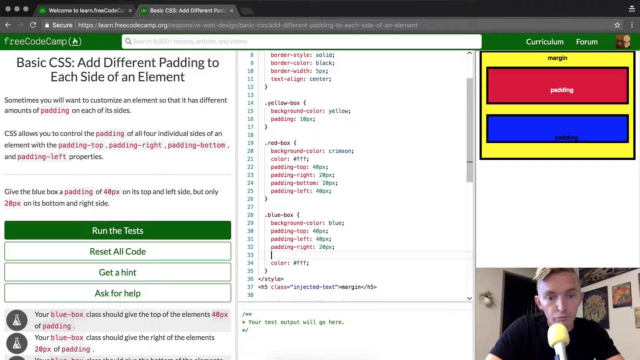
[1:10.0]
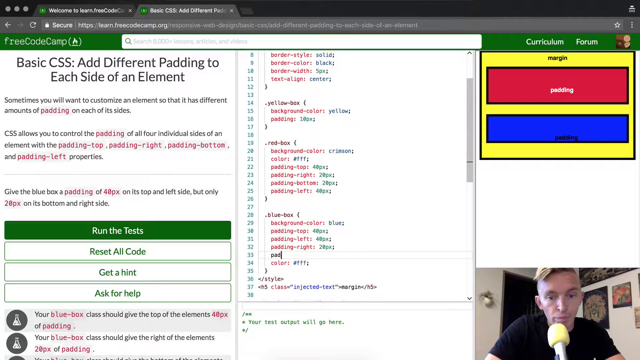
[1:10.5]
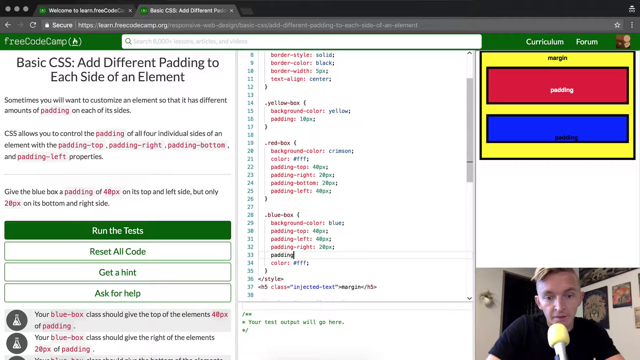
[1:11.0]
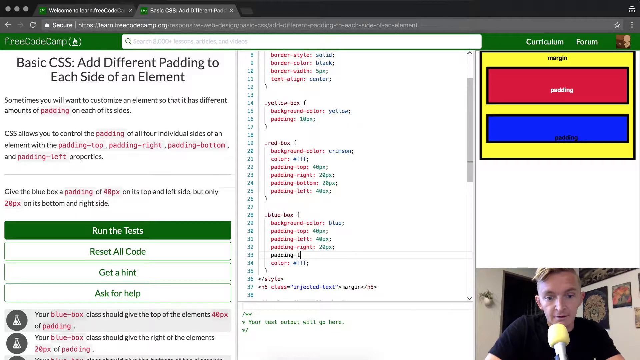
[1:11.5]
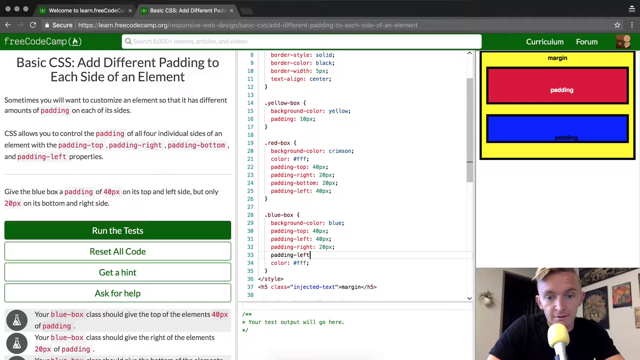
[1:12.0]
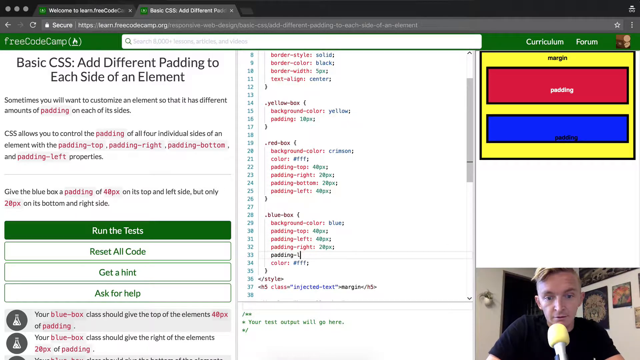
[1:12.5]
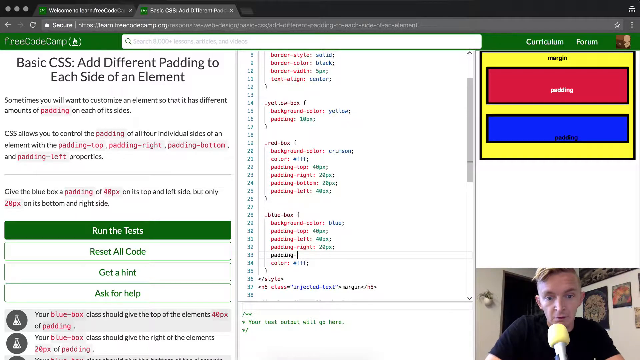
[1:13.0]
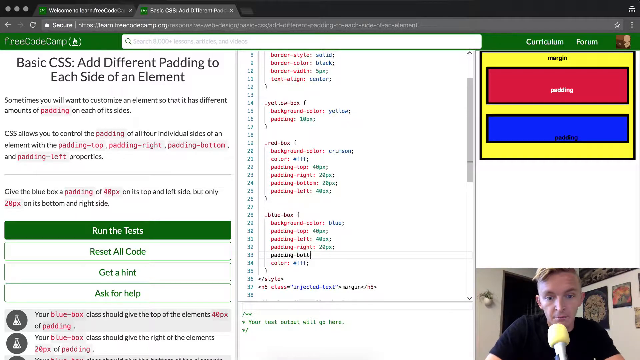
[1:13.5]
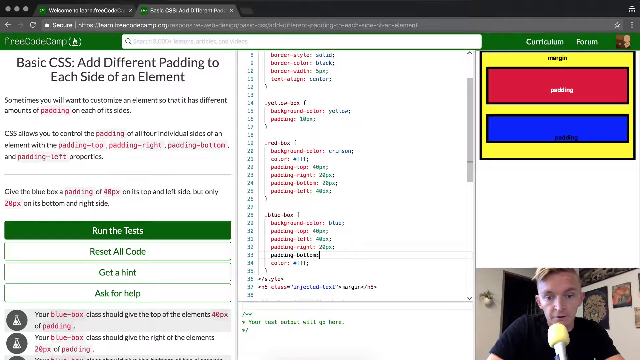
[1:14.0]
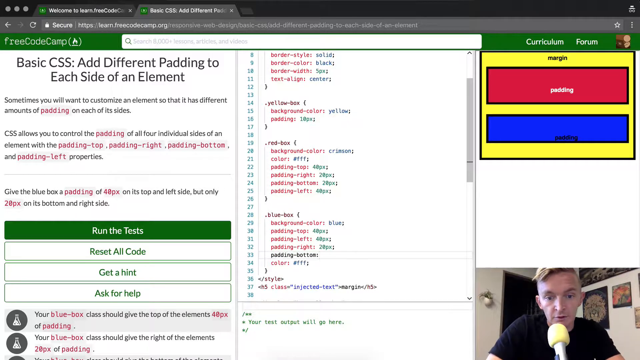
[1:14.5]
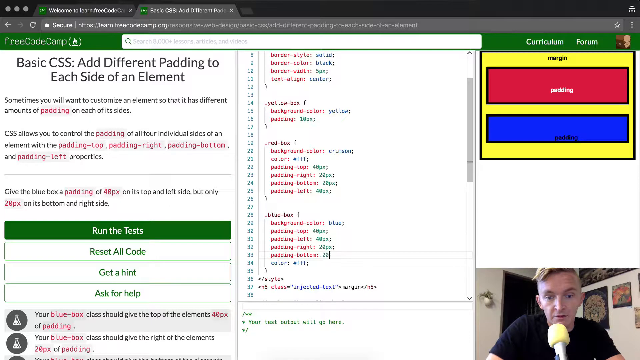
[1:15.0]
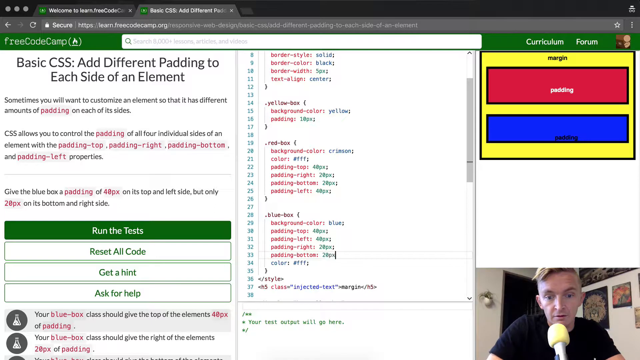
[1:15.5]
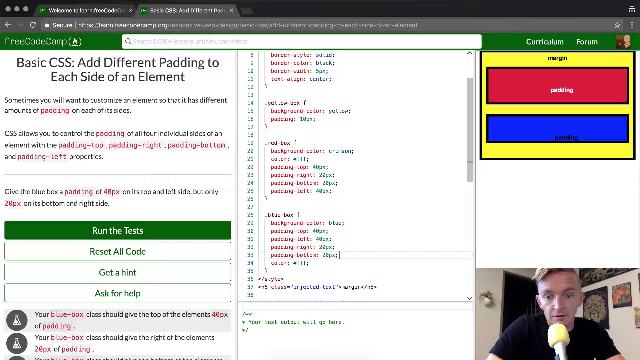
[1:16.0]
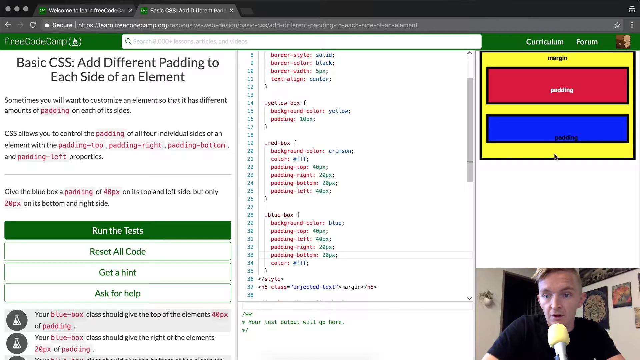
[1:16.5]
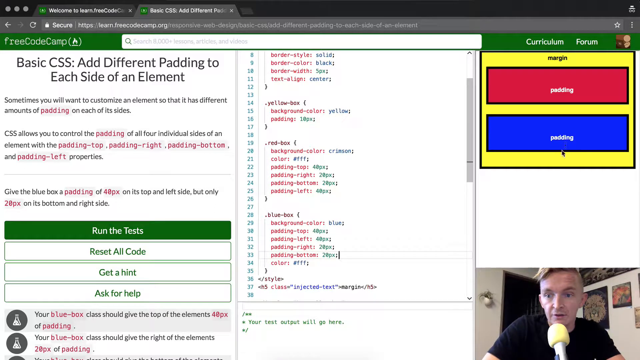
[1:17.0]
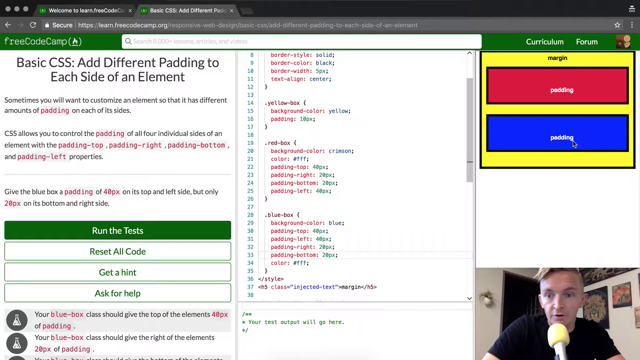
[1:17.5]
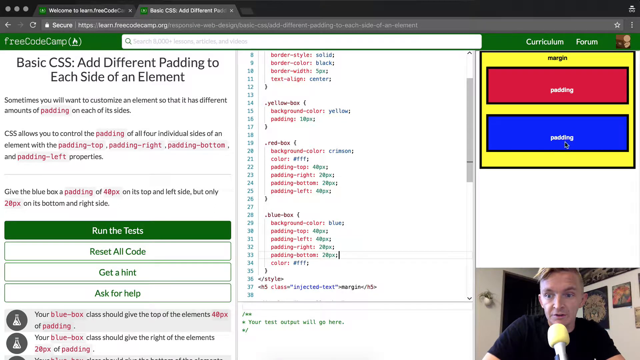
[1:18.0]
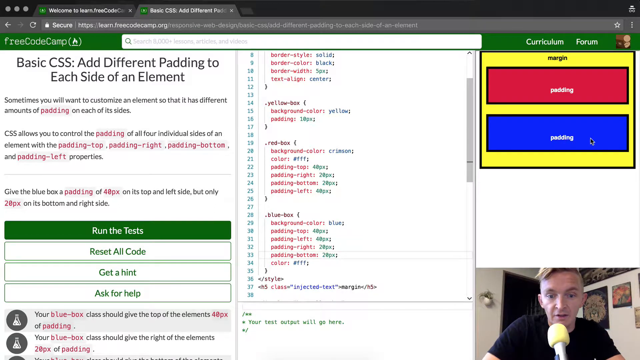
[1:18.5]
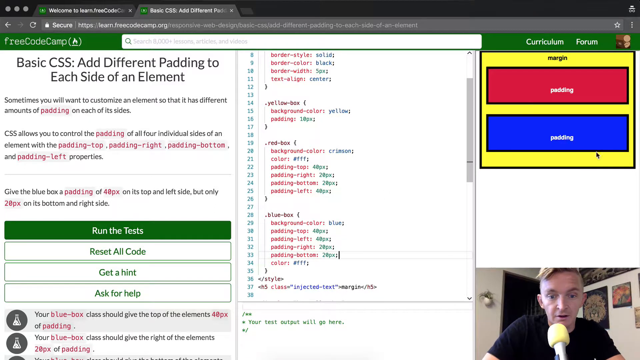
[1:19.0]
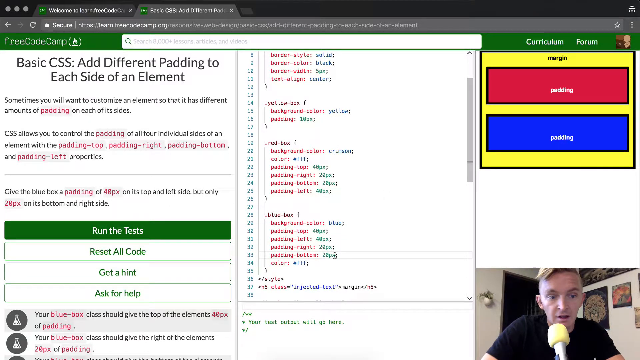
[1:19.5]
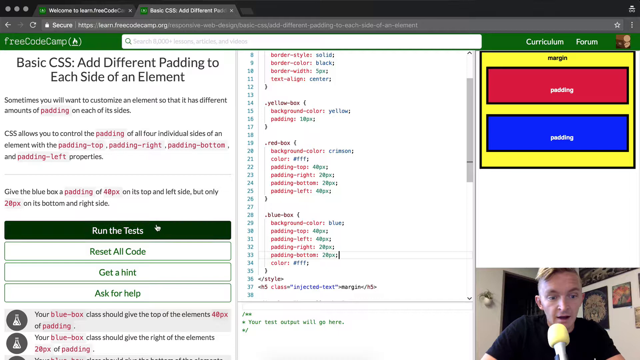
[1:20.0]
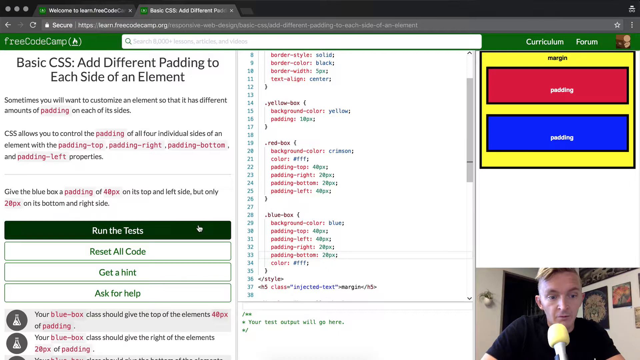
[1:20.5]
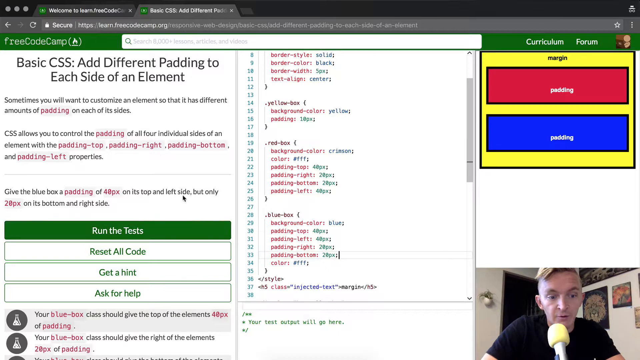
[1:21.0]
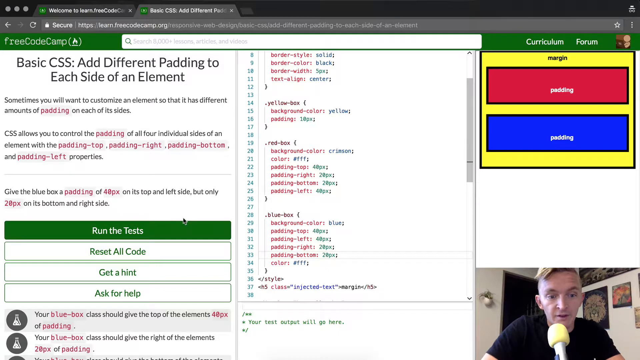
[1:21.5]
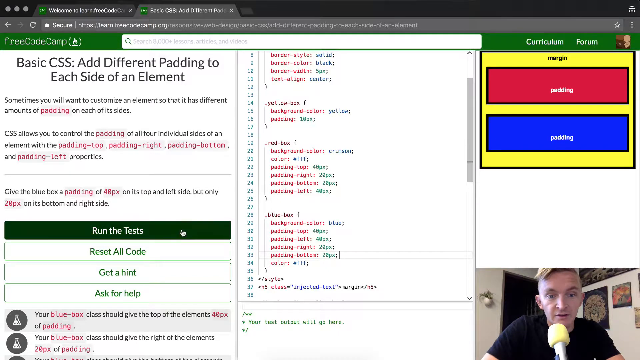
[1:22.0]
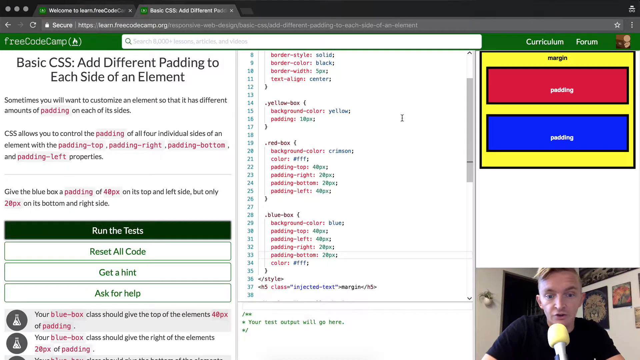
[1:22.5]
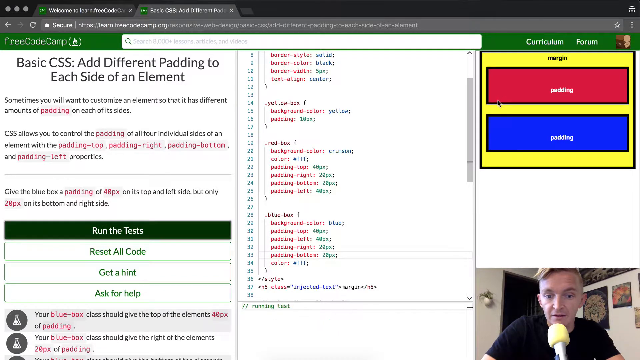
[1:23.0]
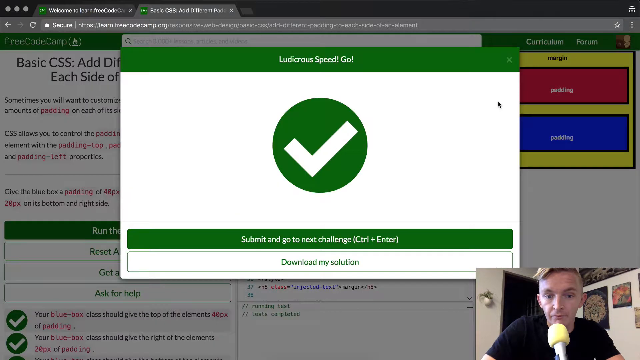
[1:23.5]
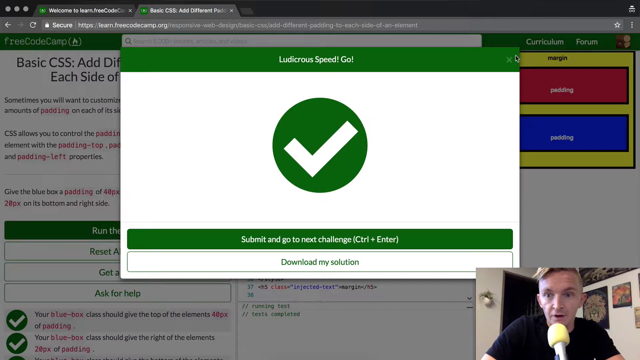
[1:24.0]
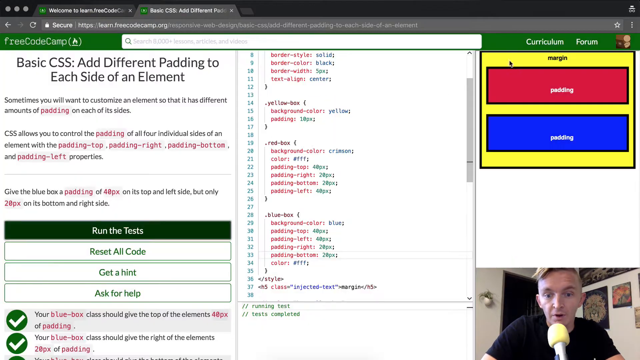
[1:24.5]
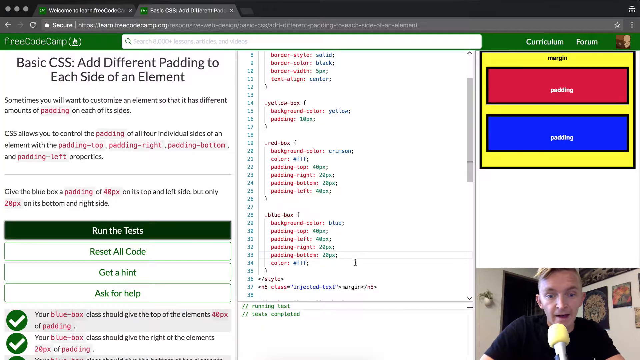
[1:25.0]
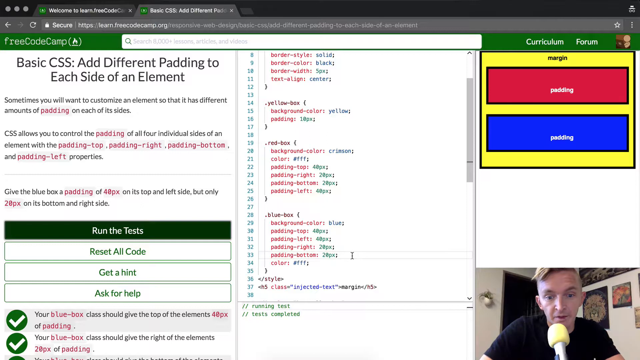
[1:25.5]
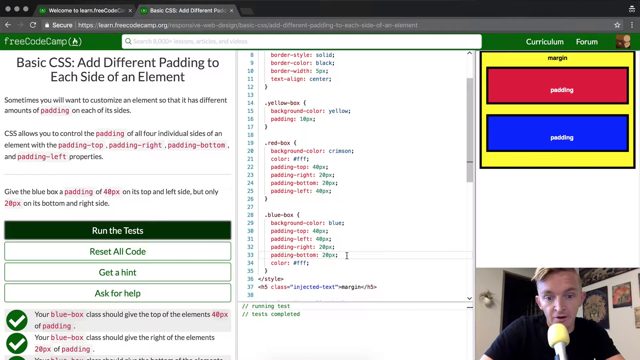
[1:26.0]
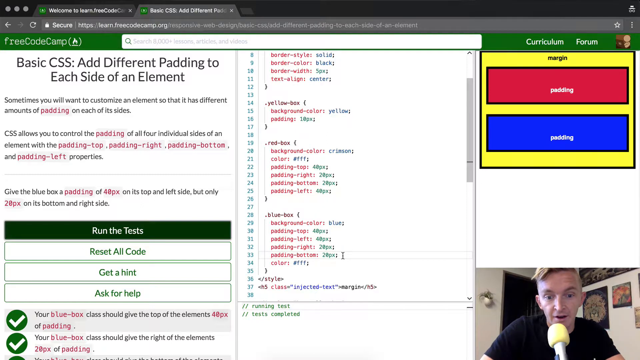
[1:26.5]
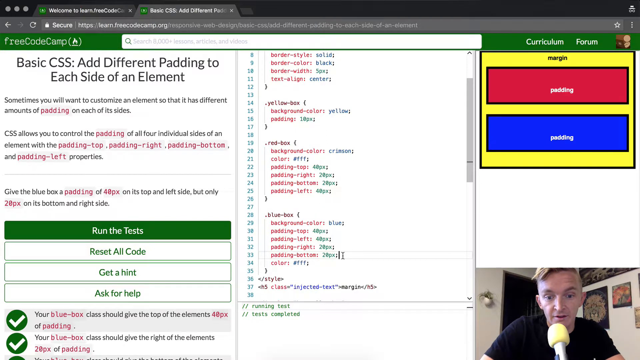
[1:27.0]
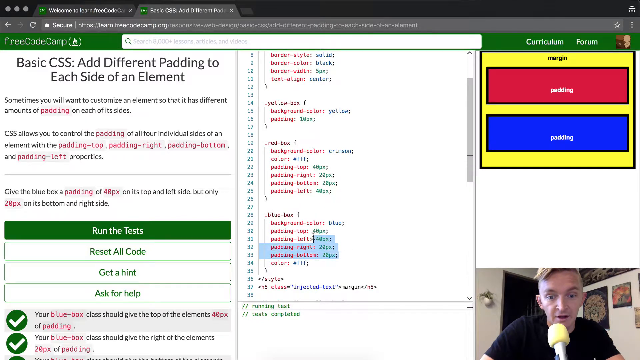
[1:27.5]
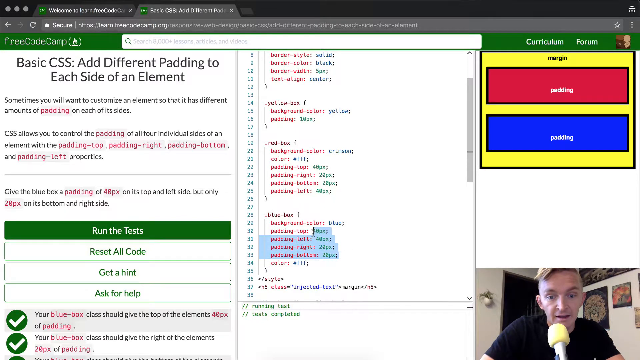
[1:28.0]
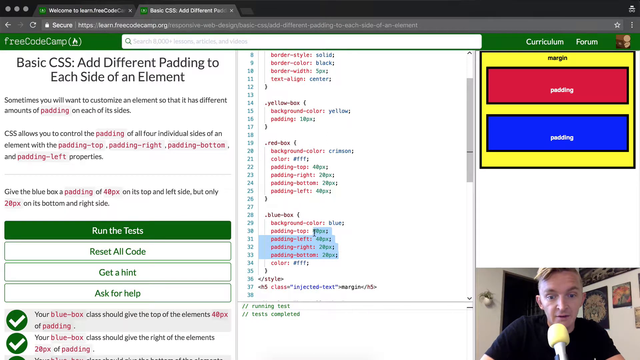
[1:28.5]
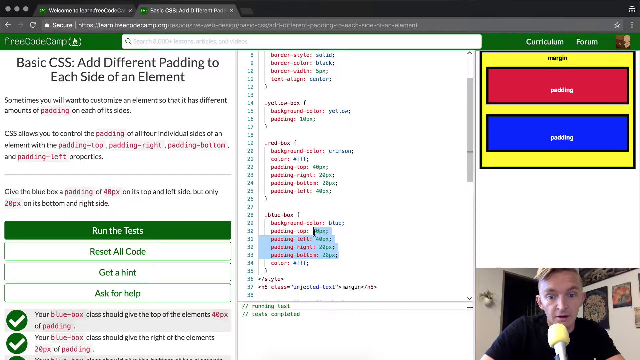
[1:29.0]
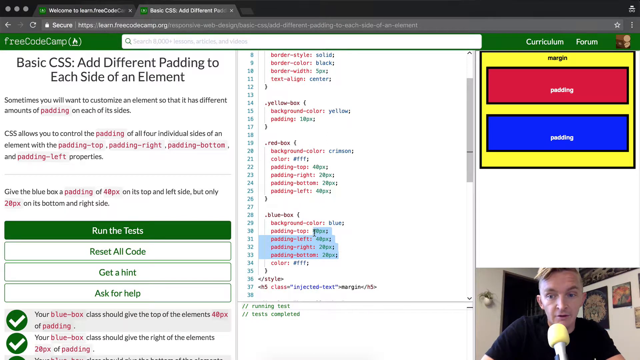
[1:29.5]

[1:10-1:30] The instructor adds another line of code with its parameters, then moves the cursor to the top right to show how the change altered the image there. He clicks the run test action button on the left side of the screen, and a pop-up appears in the middle of the page. At its top is a green bar that says "ludicrous speed go," in the center is a green circle with a white check mark, and at the bottom is a green bar that says "submit and go to next challenge," with a white bar underneath reading "download my solution." He clicks the white X in the top right, moves his cursor, and highlights some of the code.